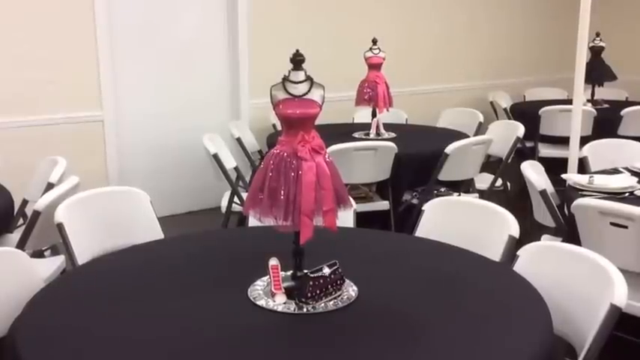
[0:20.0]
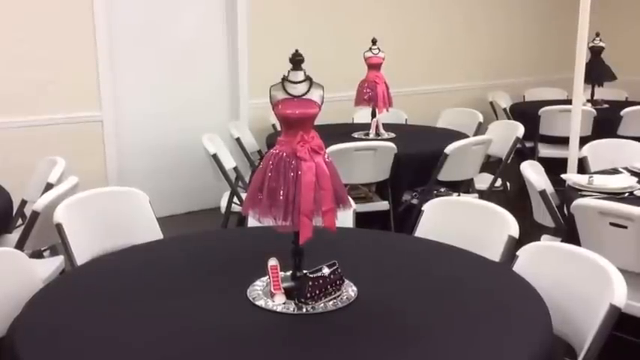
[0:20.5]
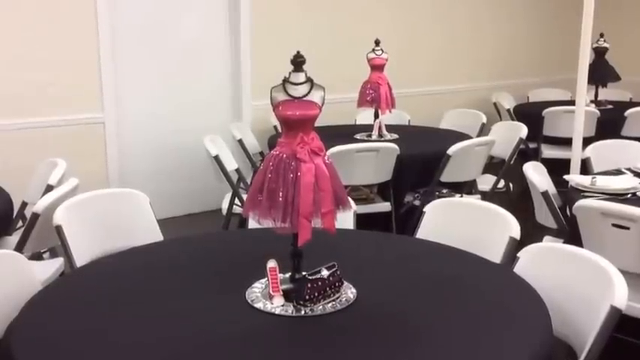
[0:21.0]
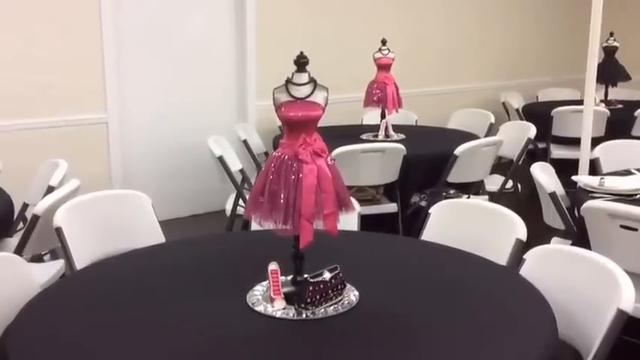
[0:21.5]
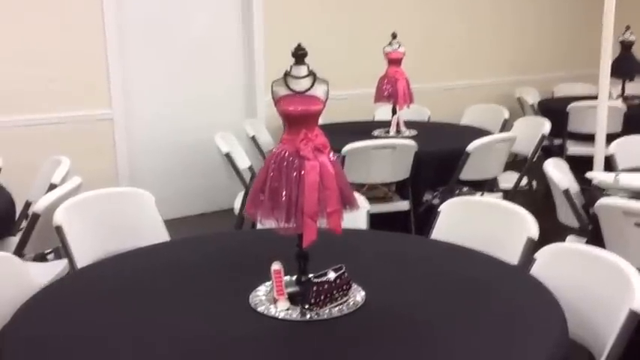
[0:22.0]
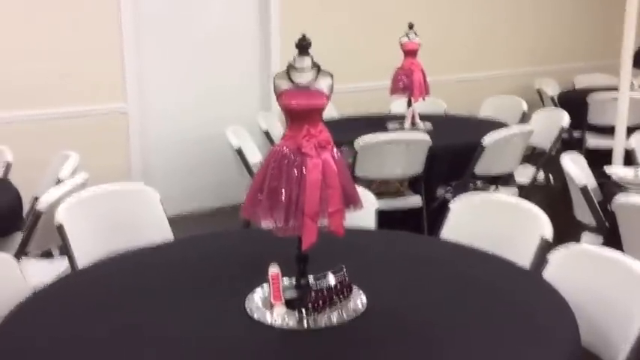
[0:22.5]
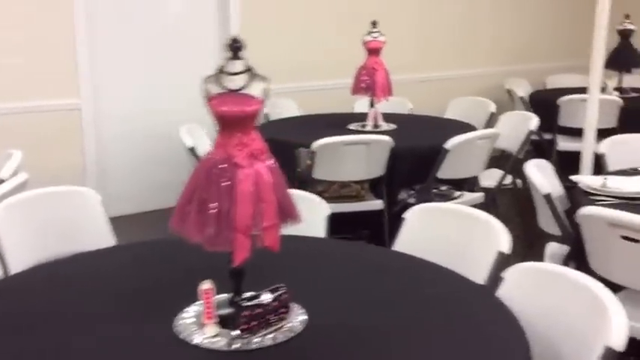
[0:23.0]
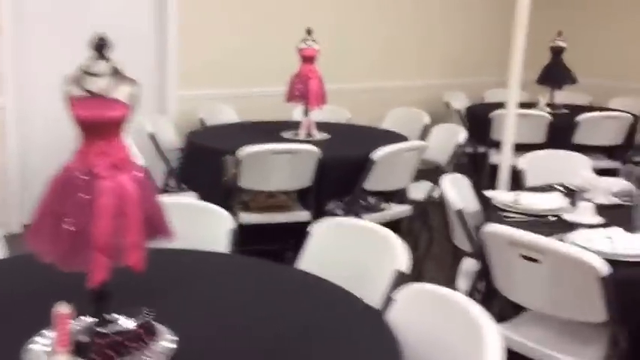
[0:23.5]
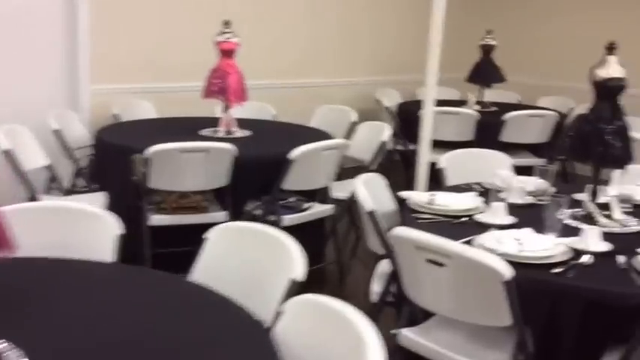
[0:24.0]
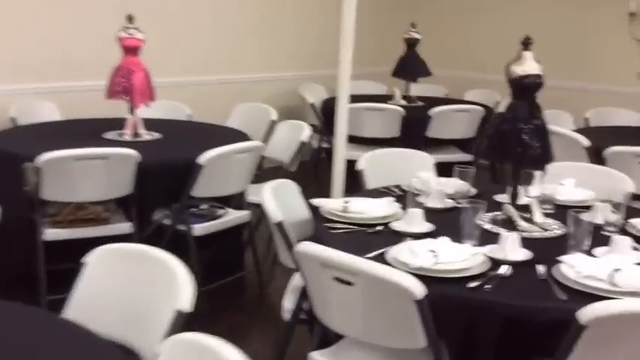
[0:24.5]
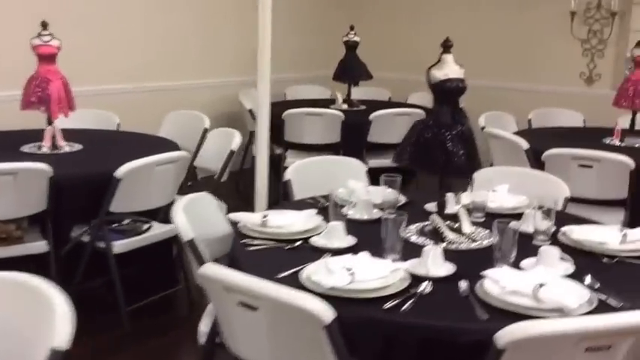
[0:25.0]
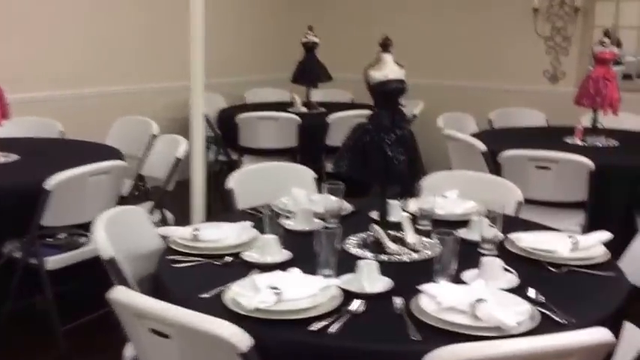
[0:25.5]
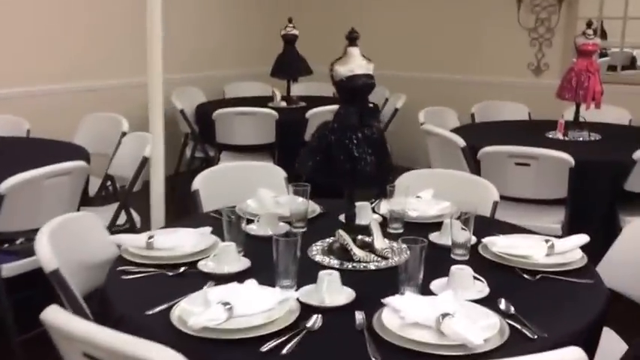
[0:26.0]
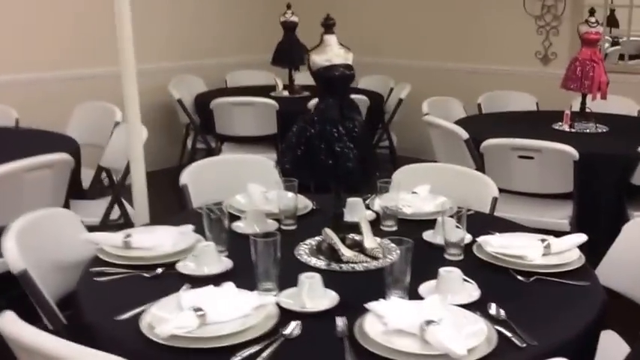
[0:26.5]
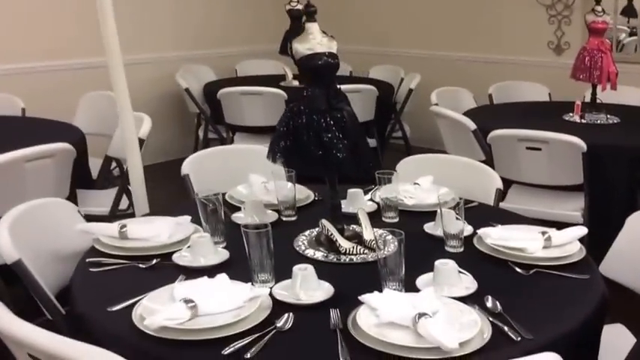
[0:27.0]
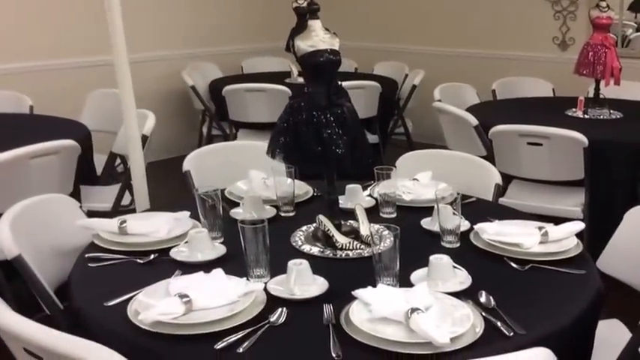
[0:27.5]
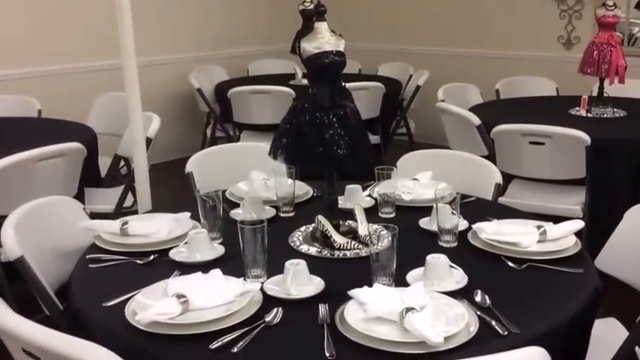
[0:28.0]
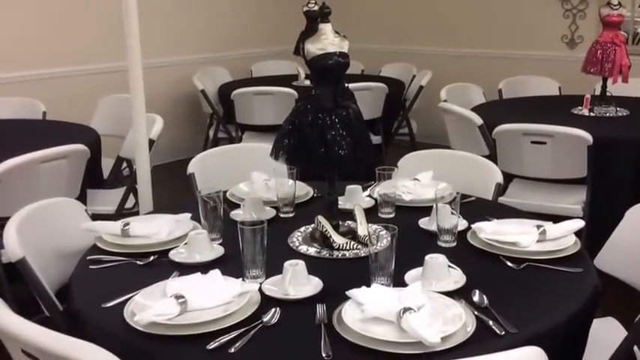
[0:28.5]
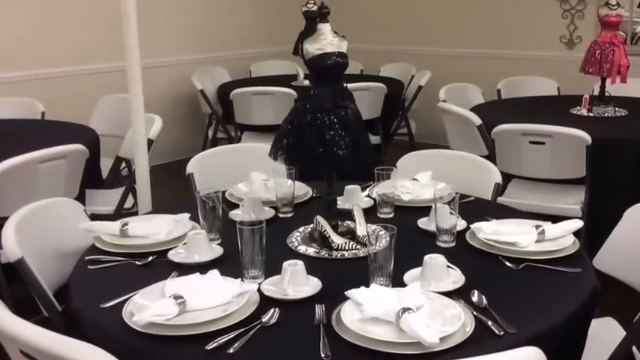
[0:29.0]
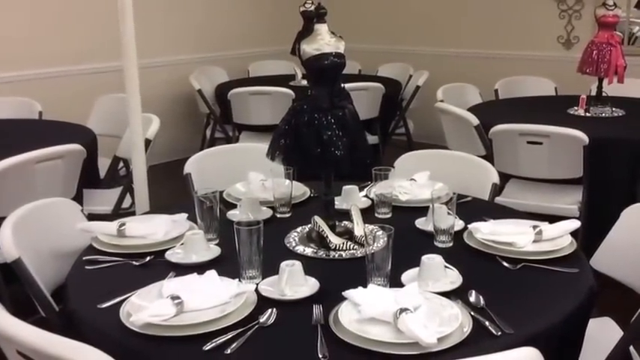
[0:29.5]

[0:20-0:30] Looking around further, the mannequin in the pink dress also has a high-heeled shoe, but only a single pink high heel; in place of the other shoe there is a very small dark brownish-purple purse. The camera moves over to the decorated table and focuses on it, with not much else happening. The pink dresses are sort of a vivid, straight pink on the upper torso, while the waist is a slightly darker pink, and around the hip line there is a double ribbon on the right side.